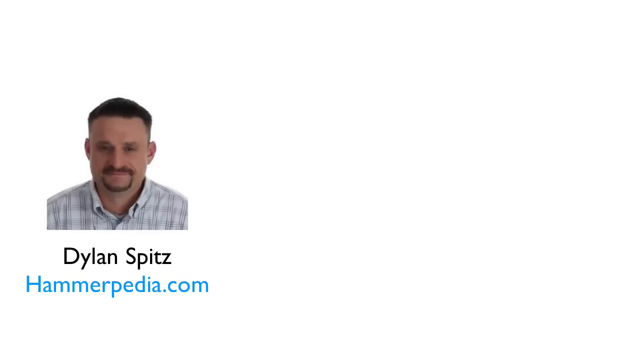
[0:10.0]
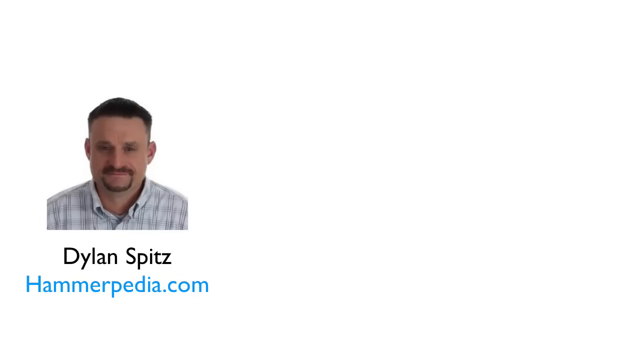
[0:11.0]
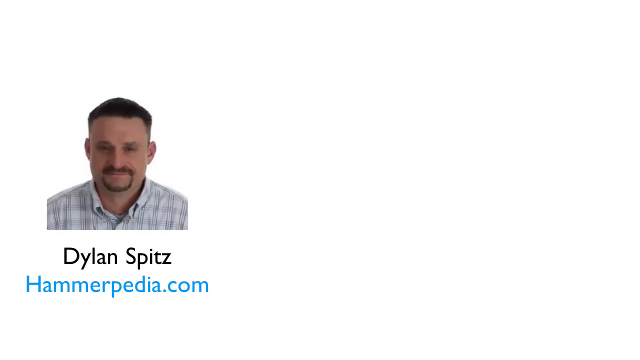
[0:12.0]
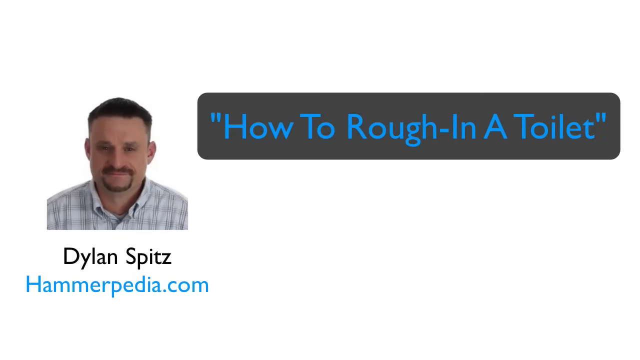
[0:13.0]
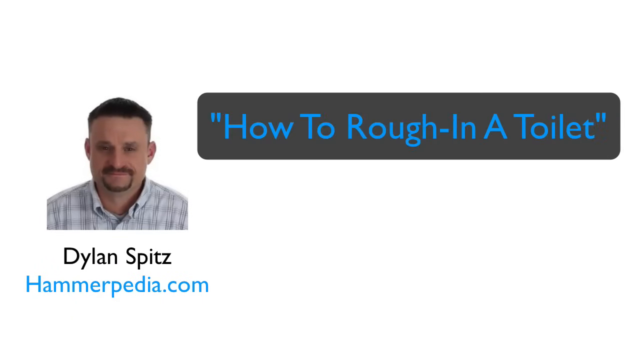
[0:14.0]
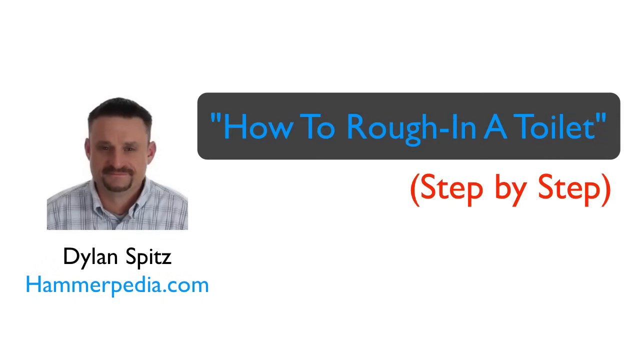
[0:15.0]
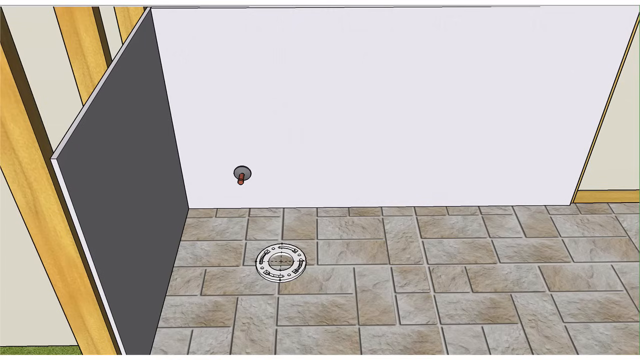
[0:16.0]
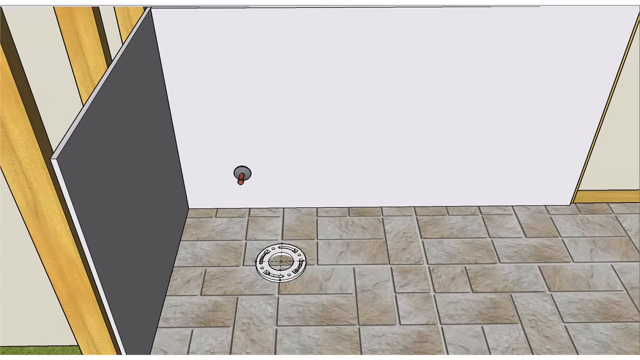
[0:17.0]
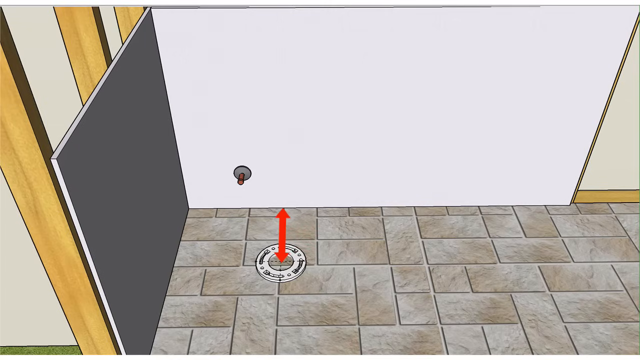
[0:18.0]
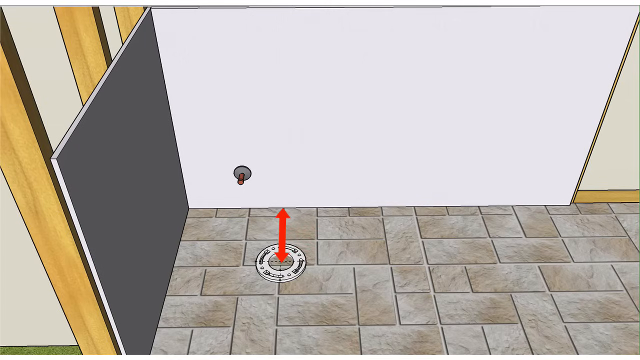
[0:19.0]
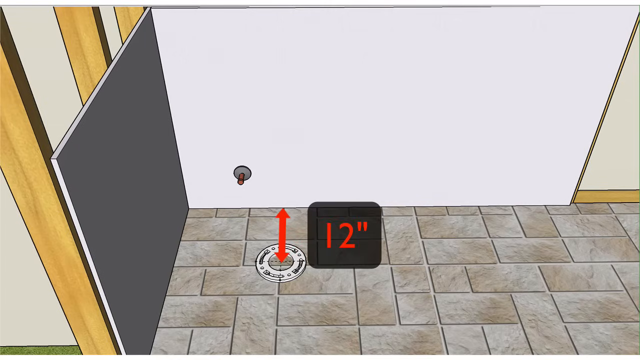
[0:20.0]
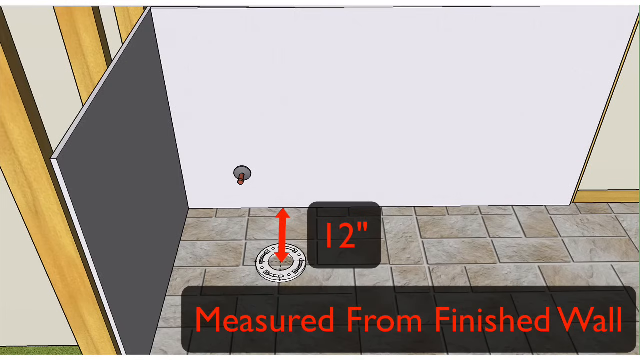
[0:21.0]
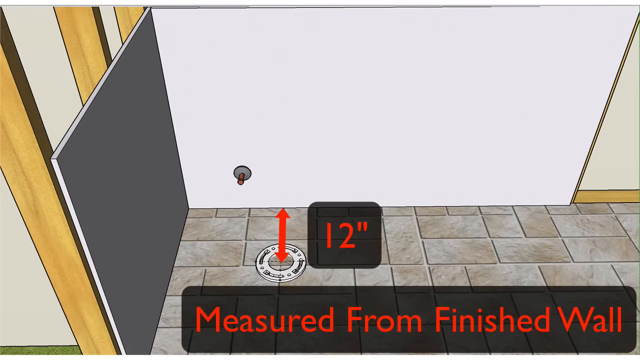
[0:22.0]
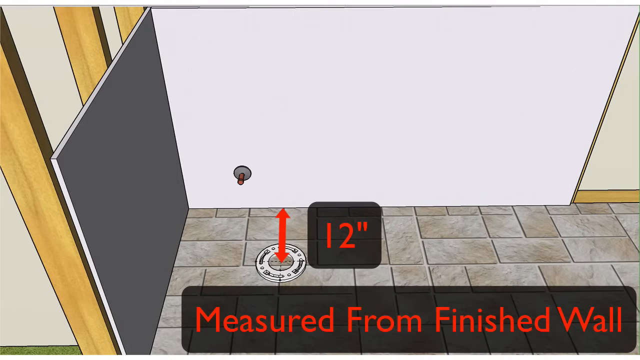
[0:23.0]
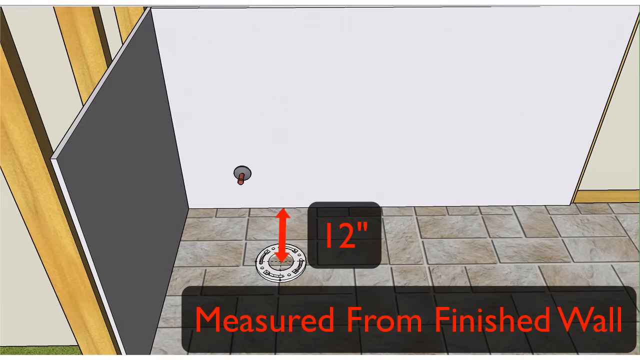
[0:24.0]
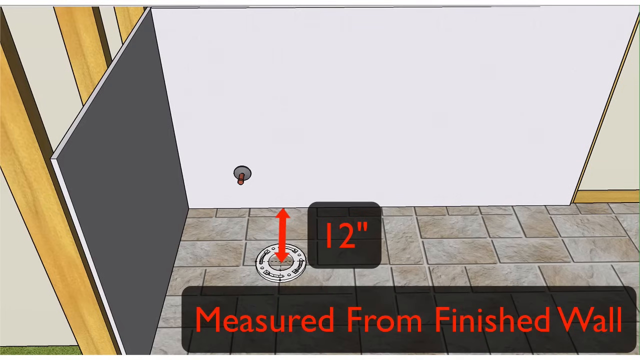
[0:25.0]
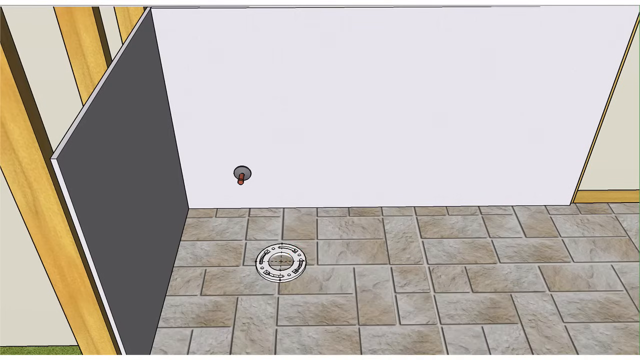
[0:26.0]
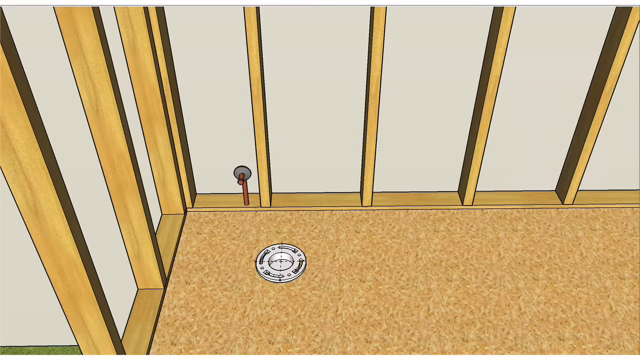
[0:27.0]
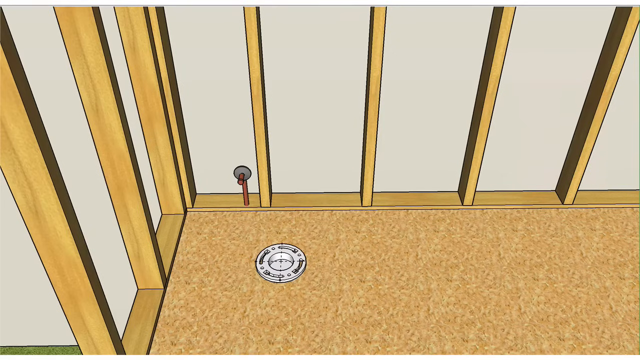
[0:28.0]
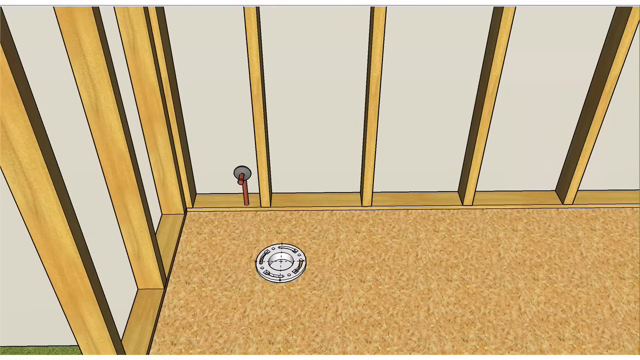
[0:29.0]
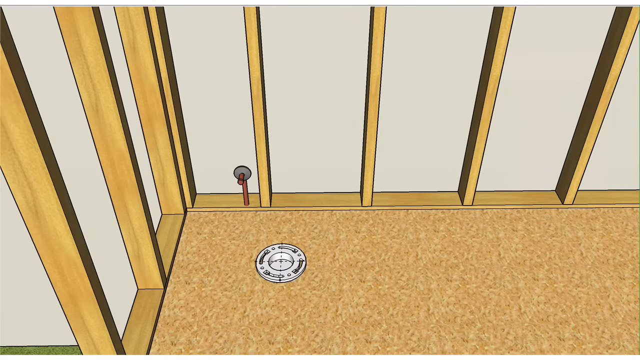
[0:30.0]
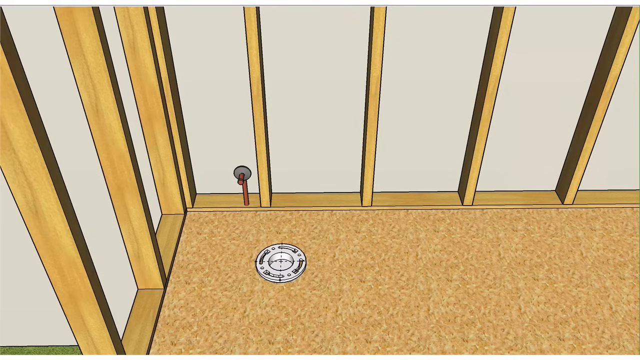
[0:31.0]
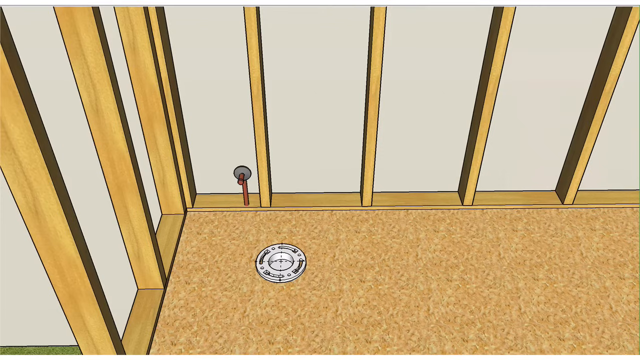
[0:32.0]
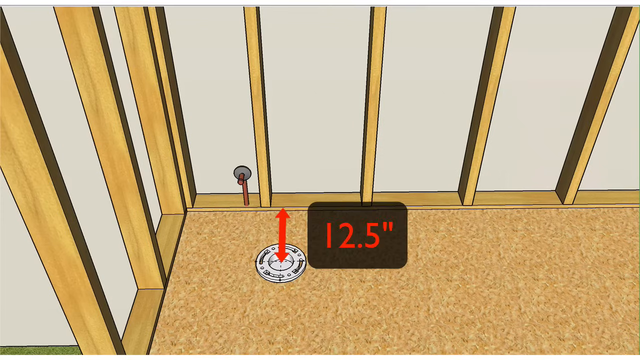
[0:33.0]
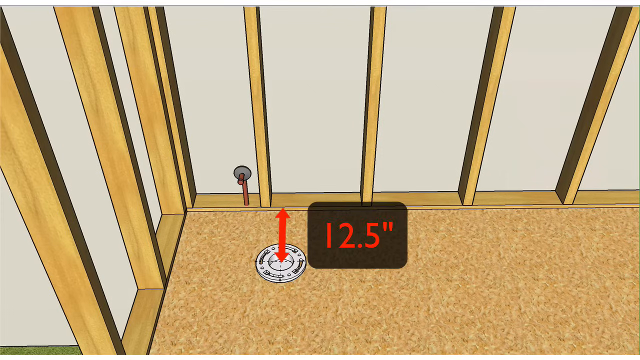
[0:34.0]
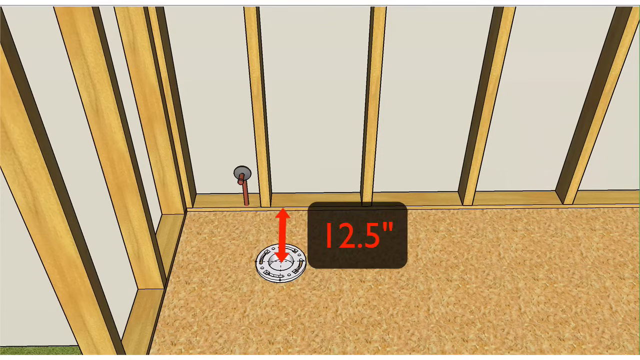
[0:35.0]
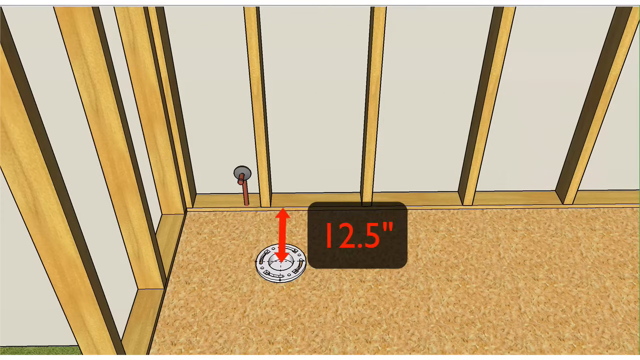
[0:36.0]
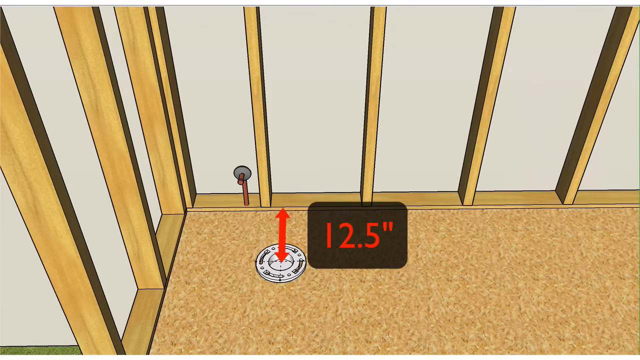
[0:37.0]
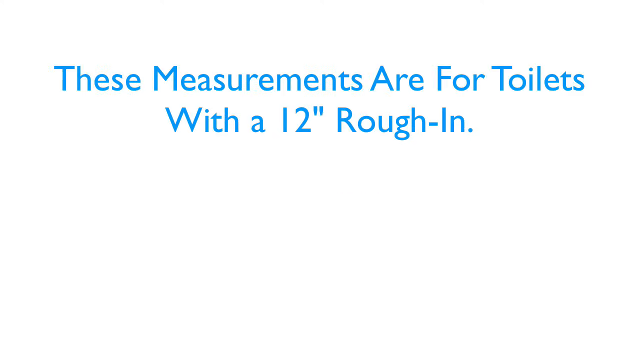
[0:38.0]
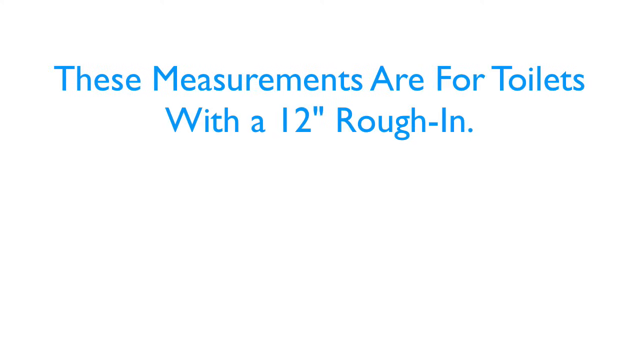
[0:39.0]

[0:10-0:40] A headshot of a light-skinned man with dark hair and a low cut, wearing a patterned shirt, appears on a white background; he is Dylan Spitz from Hamarpedia.com. Blue text on a dark grey background slides in from the right side of the screen reading "How to rough-in a toilet", followed by more text in parentheses, also from the right, reading "(Step by step". An animated model then shows wooden frames, white and grey surfaces on the wall, a drain on a tiled floor, and what looks like a red switch on the white side of the wall. A red double arrow appears directly in the centre of the drain, then the text 12" appears on a transparent dark grey background. At the bottom of the screen, more text on a similar transparent background reads "Measured from finished wall". The scene transitions to a similar animated model in which the tiled floor has been replaced with a wooden surface, the drain remaining in its earlier position. The double arrow reappears with 12.5" on another transparent dark grey background beside it. Blue text on a white background then reads "Keep in mind", followed by text reading "These measurements are for toilets with a 12" rough in".